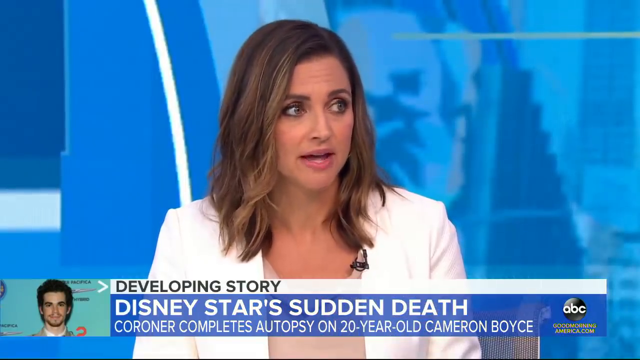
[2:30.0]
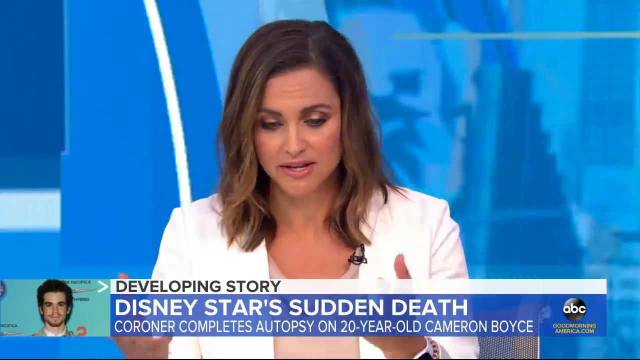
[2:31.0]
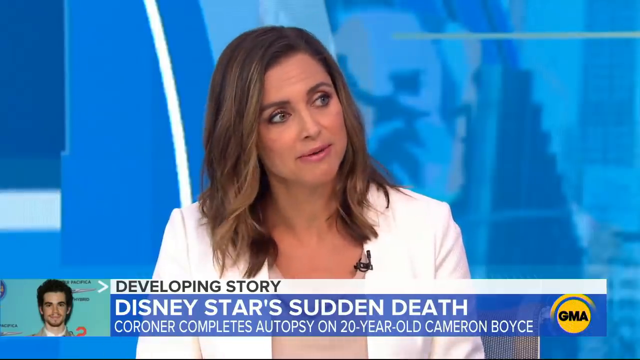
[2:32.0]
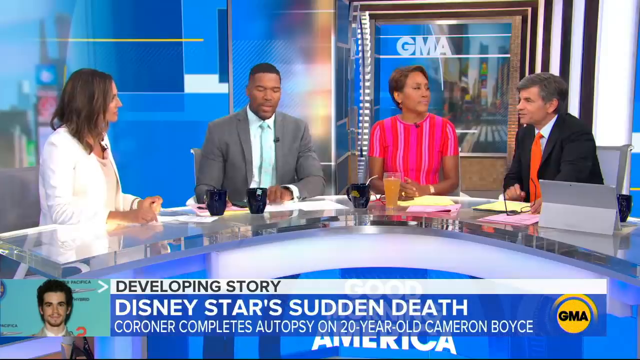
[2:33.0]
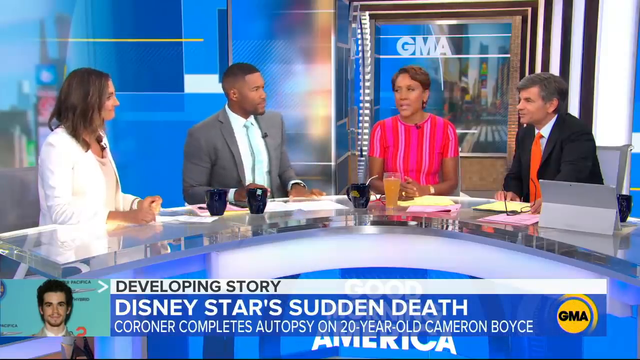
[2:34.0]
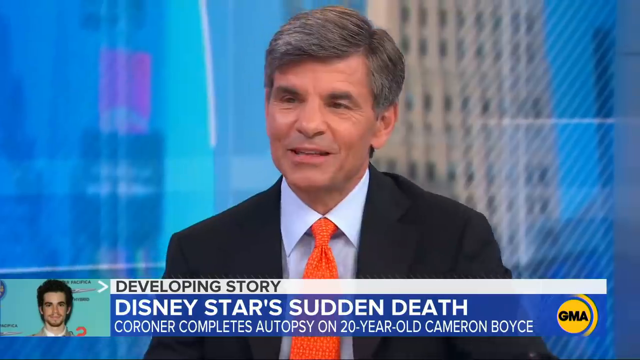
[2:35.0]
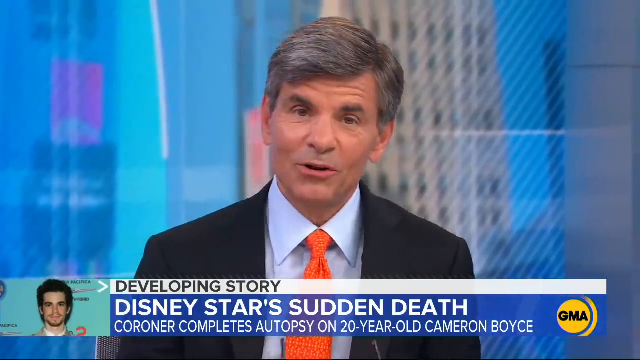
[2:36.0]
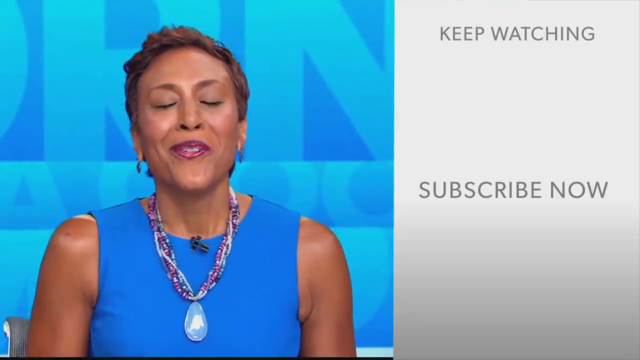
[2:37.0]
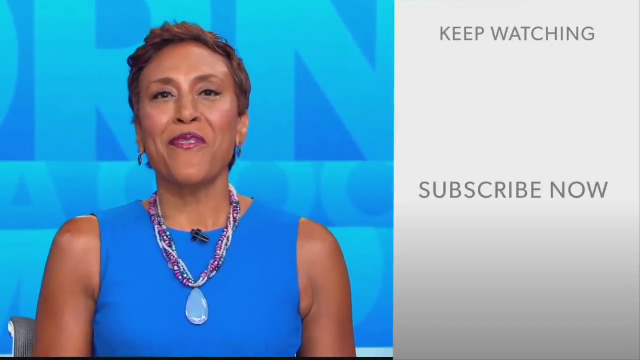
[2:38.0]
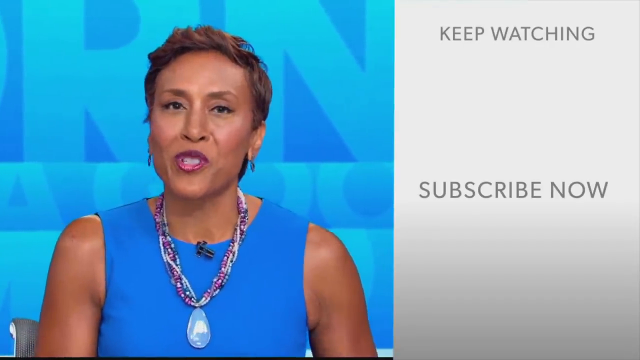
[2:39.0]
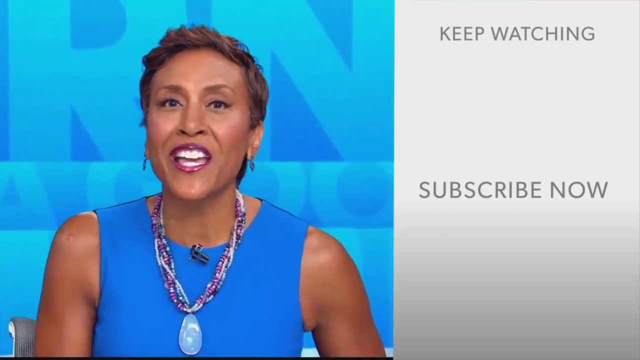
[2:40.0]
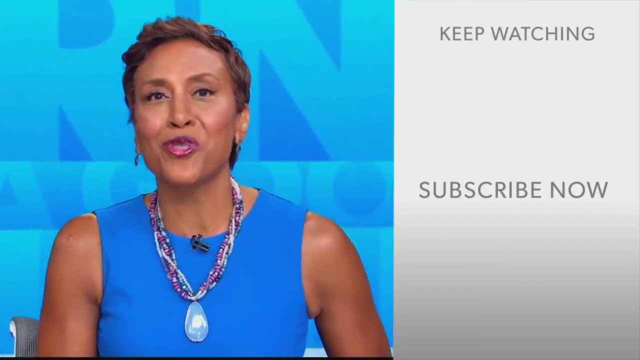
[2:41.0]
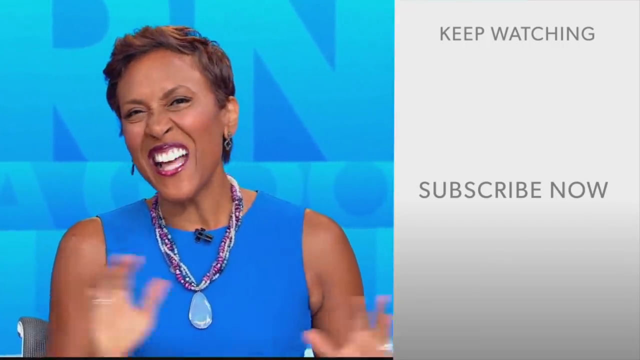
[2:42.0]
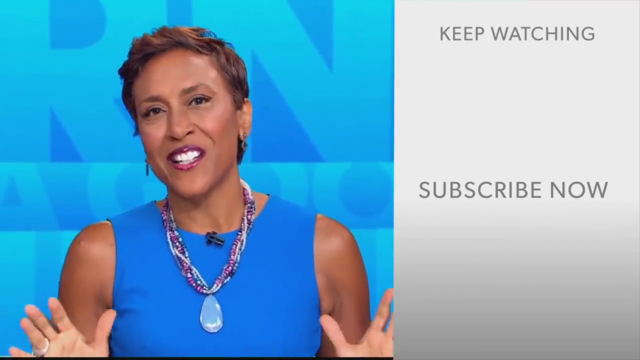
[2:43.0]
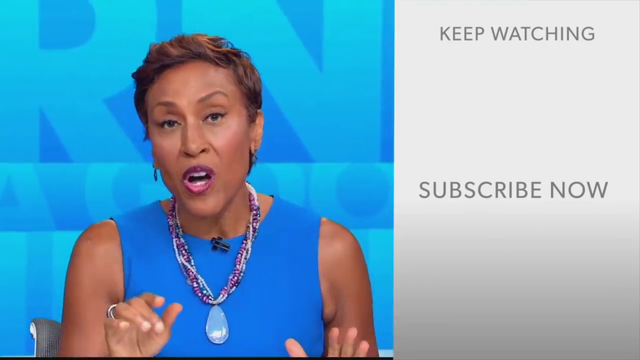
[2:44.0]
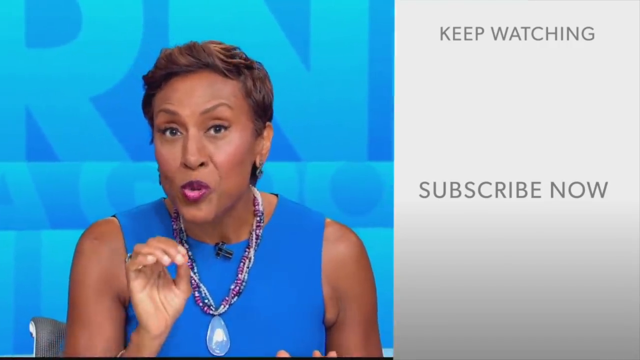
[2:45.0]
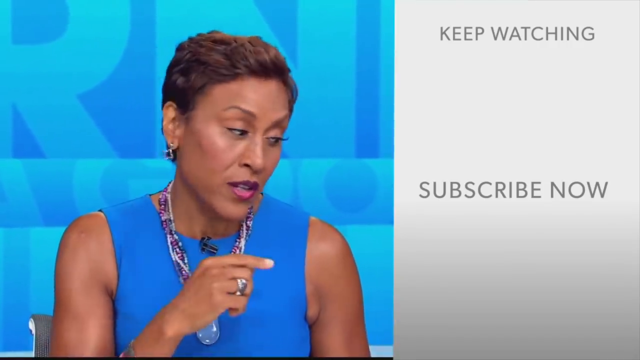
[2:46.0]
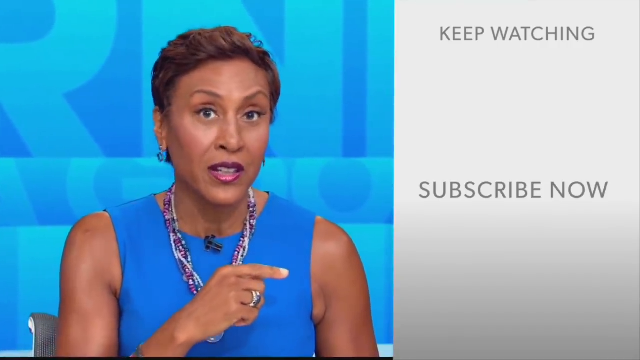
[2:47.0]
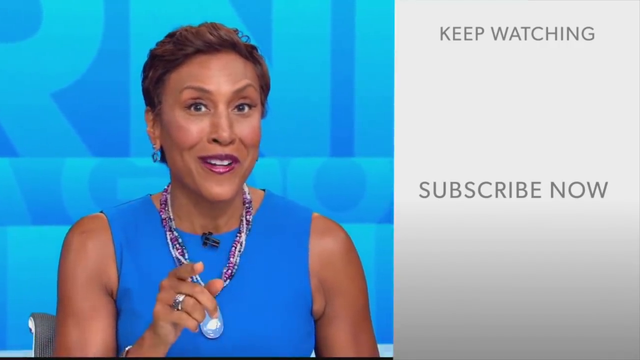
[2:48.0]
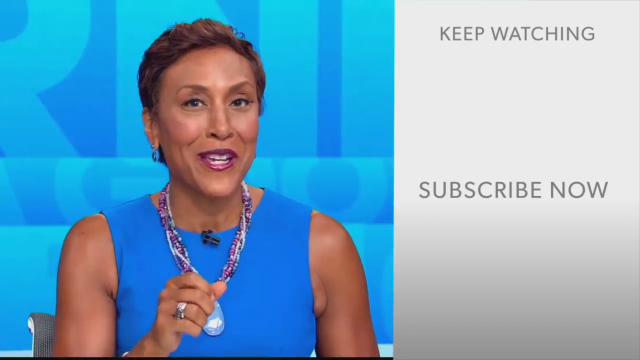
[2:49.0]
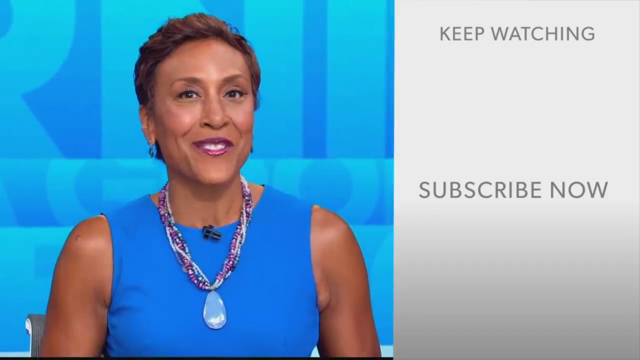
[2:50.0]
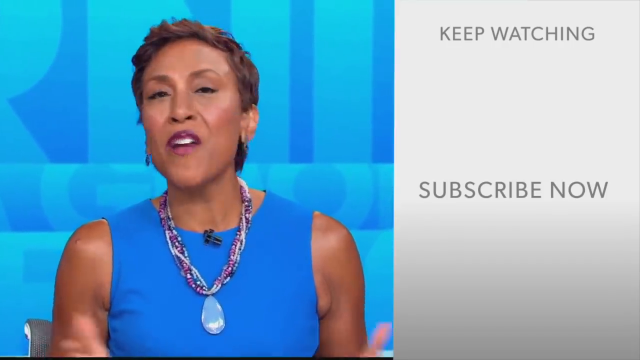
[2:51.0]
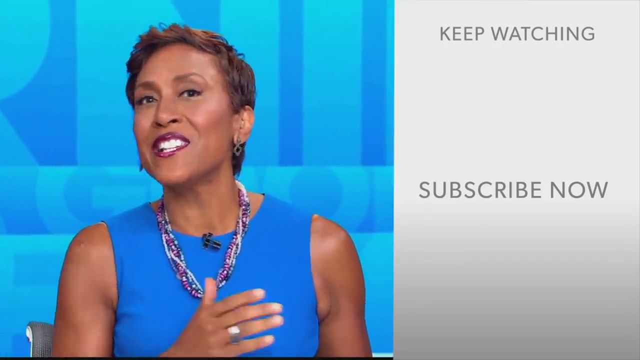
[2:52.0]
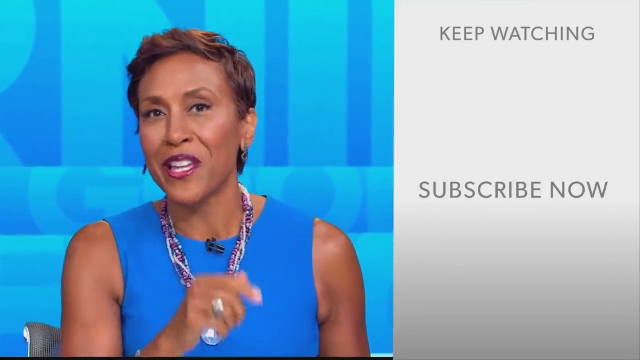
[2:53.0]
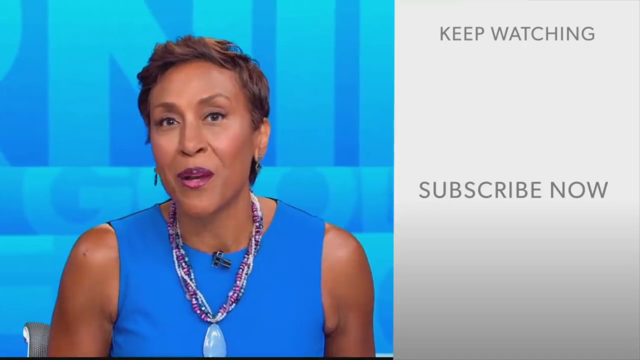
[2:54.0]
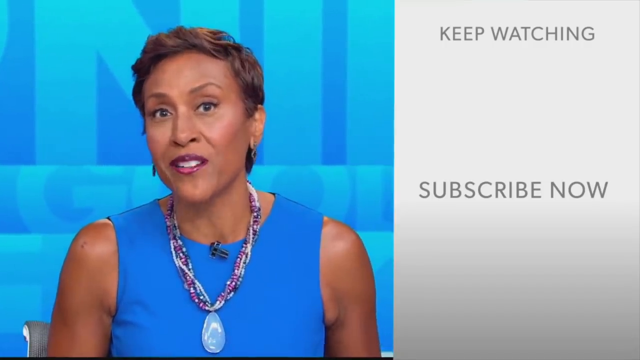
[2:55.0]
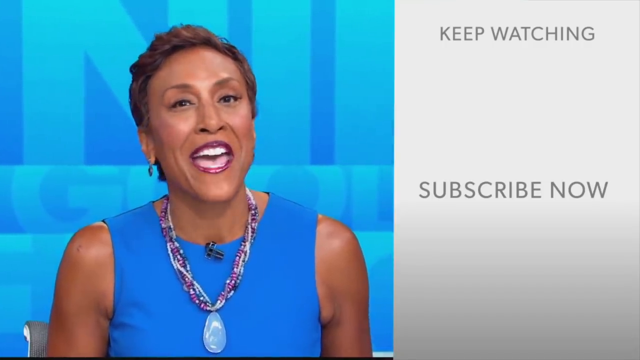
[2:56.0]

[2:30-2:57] Paula Faris continues to be shown in a close-up, nodding and speaking. She looks briefly at the table in front of her as she lifts her hands, then looks back at the woman to her left, tilts her head and speaks. A wide shot shows the four presenters, and the man with the orange tie speaks while staring directly at the woman in white. The shot changes to him speaking, and he looks briefly from the right toward the camera as the shot changes to a two-panel layout. The smaller panel on the left takes up about a third of the space and is grey with dark grey wording, all in capital letters, reading "keep watching" at the top and "subscribe now" in the middle. On the left side, the woman who wore red and pink earlier appears in a different outfit: dark red lipstick, a thick purple necklace with a jewel at the bottom, and a bright blue boat-neck top. She speaks directly to the camera, seemingly ending the news segment by promoting the news source's YouTube channel.